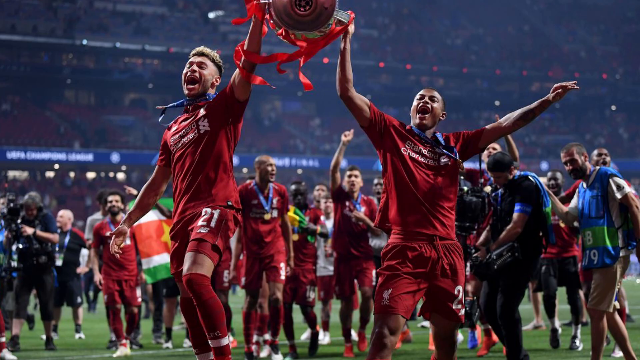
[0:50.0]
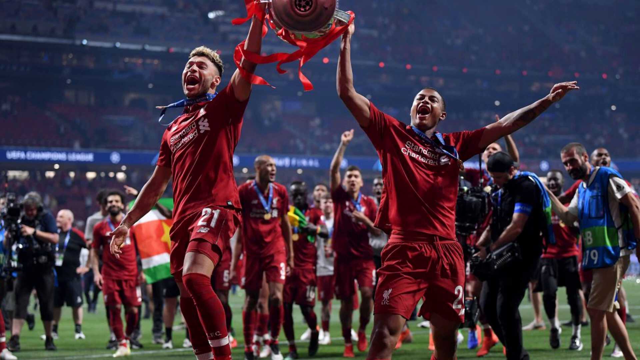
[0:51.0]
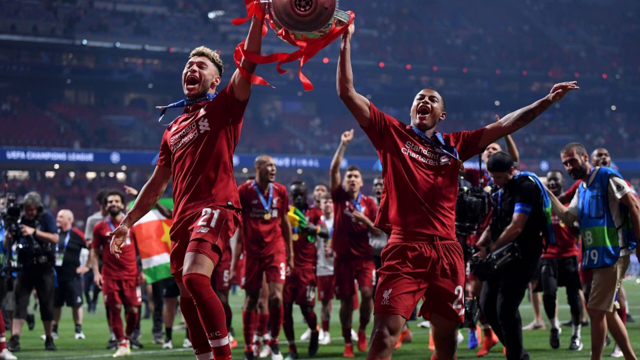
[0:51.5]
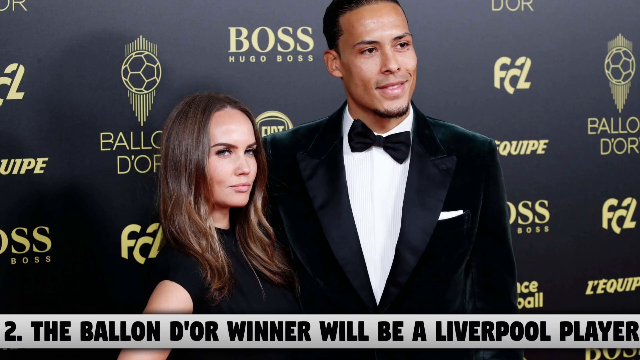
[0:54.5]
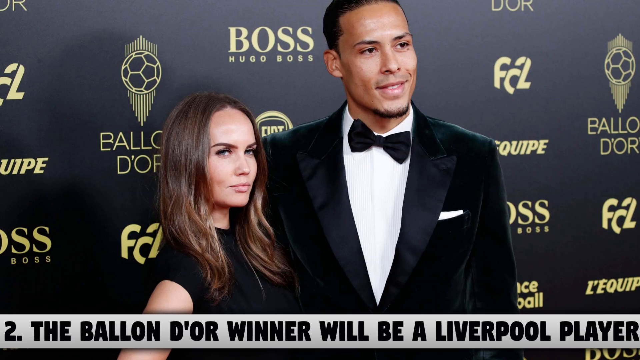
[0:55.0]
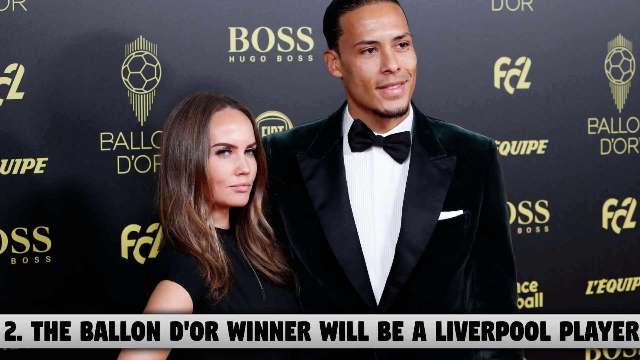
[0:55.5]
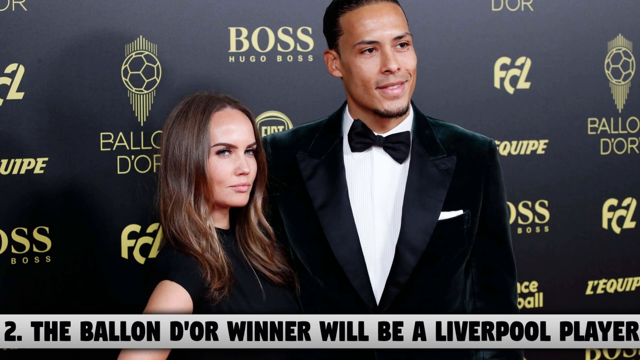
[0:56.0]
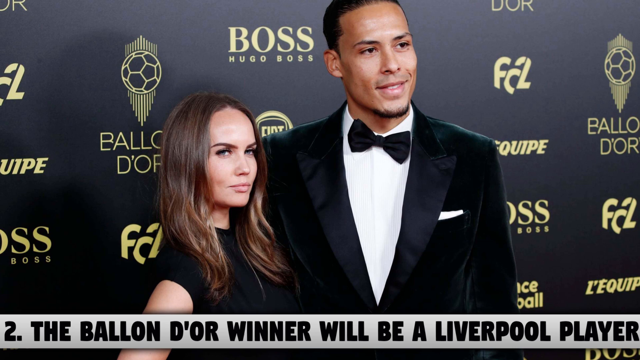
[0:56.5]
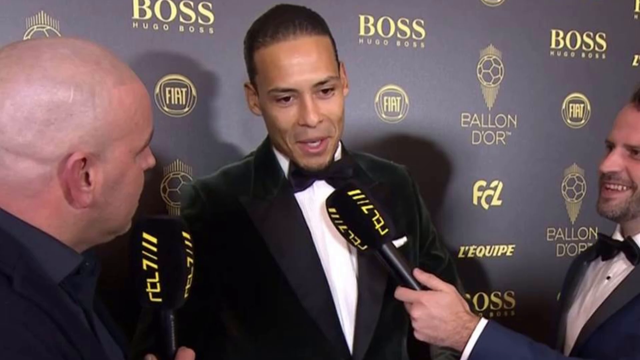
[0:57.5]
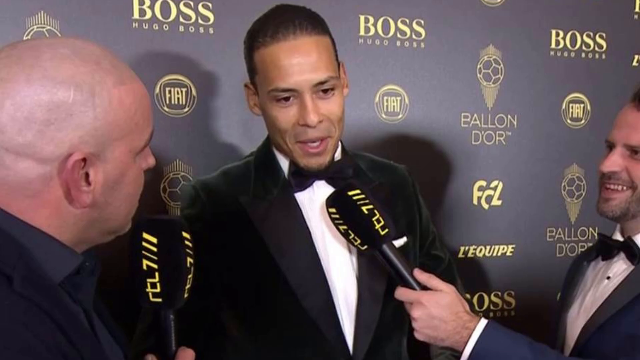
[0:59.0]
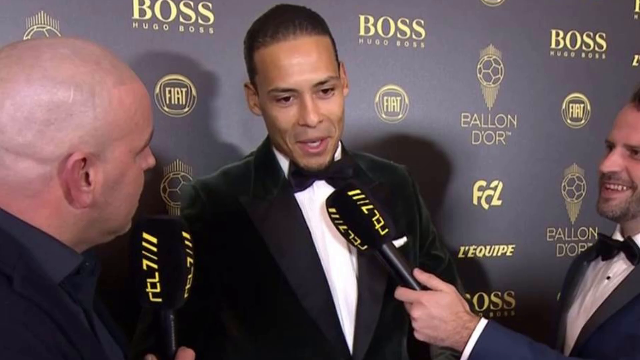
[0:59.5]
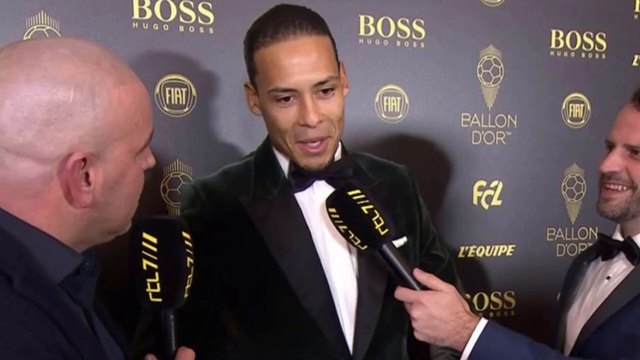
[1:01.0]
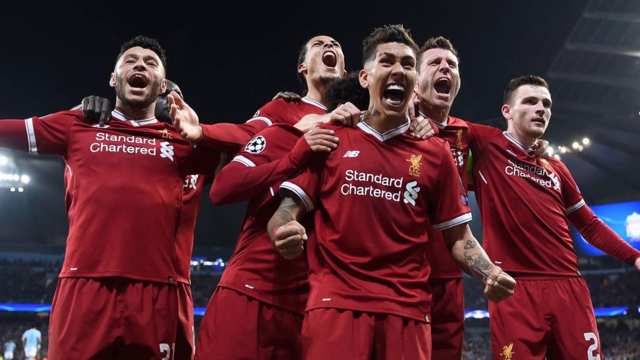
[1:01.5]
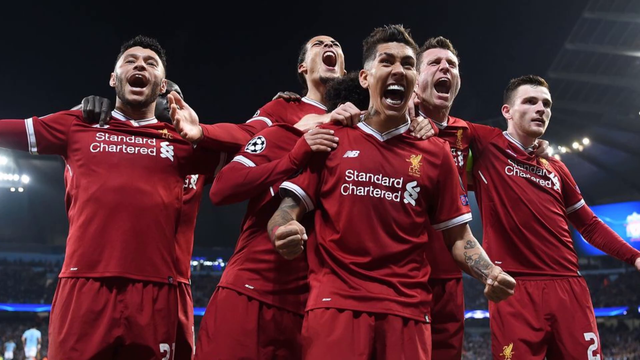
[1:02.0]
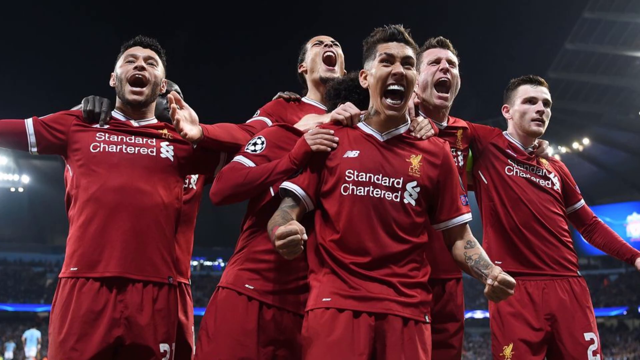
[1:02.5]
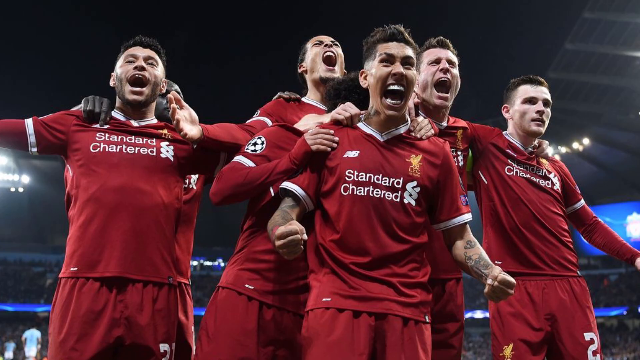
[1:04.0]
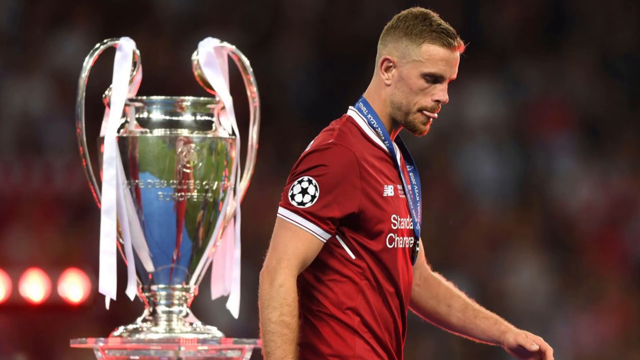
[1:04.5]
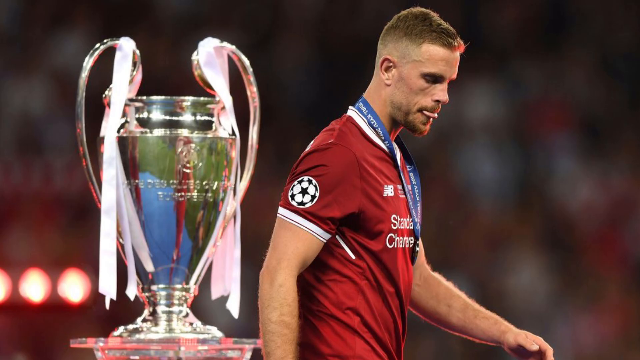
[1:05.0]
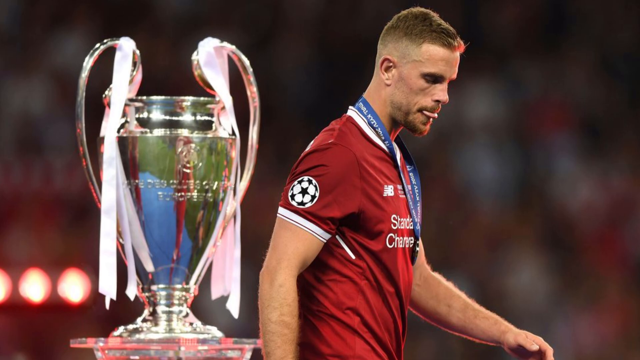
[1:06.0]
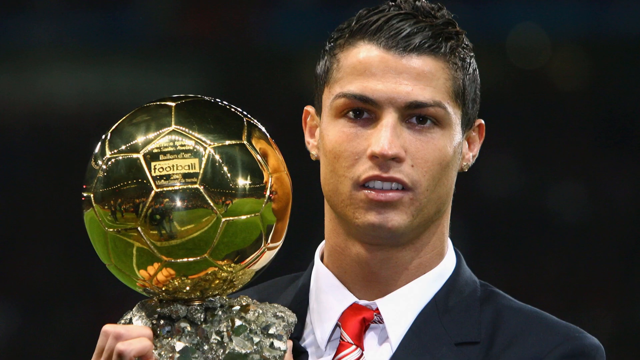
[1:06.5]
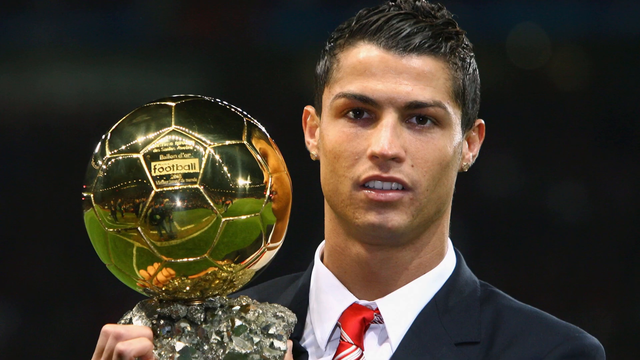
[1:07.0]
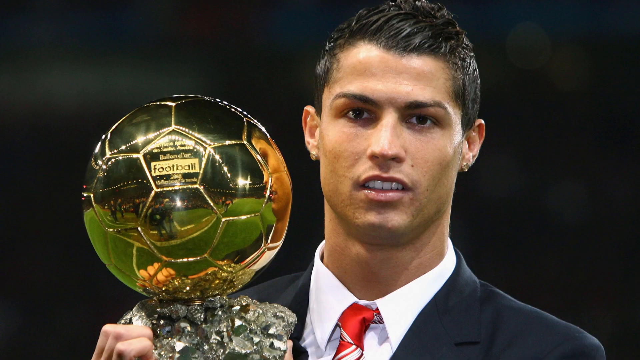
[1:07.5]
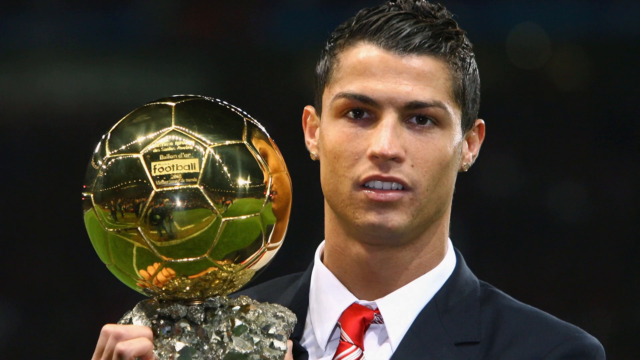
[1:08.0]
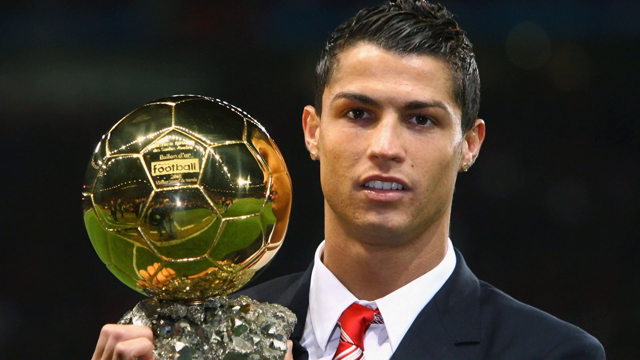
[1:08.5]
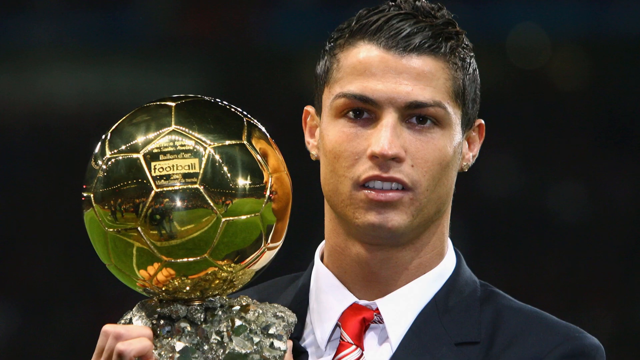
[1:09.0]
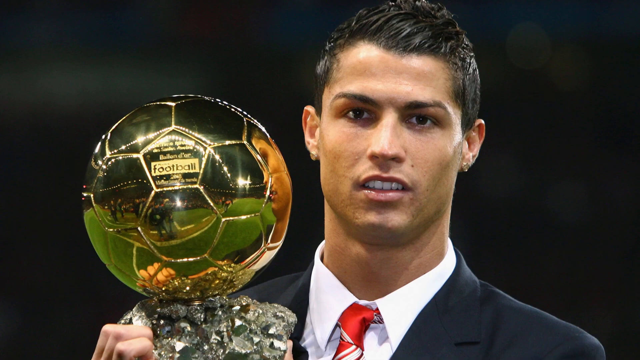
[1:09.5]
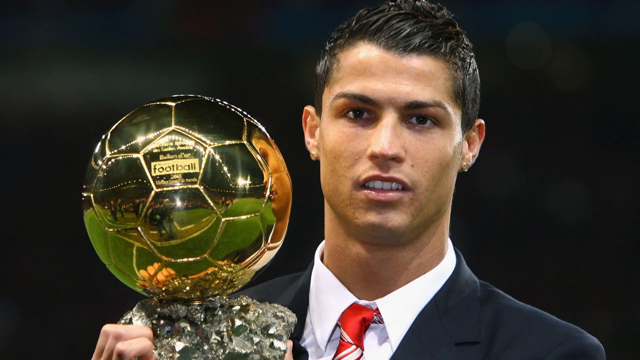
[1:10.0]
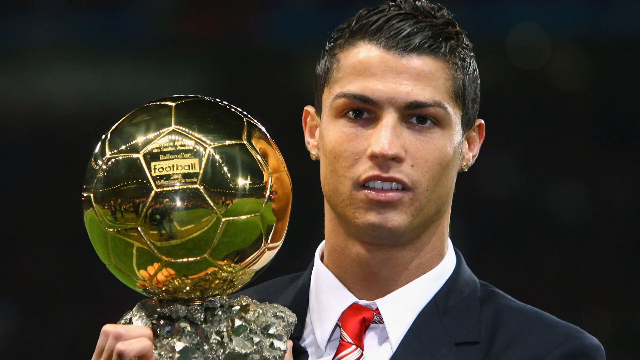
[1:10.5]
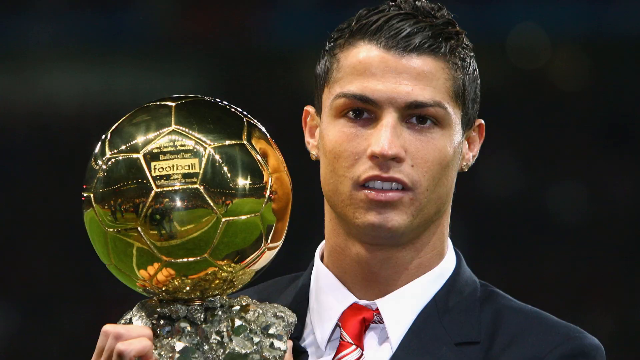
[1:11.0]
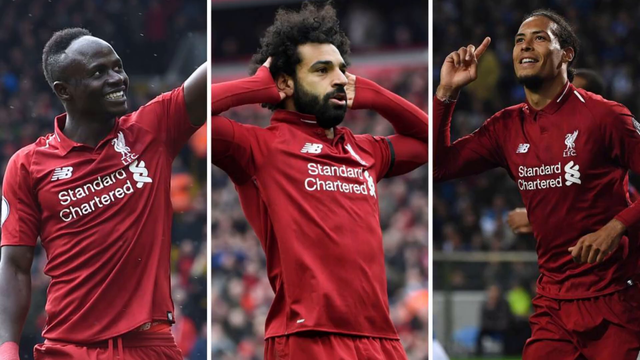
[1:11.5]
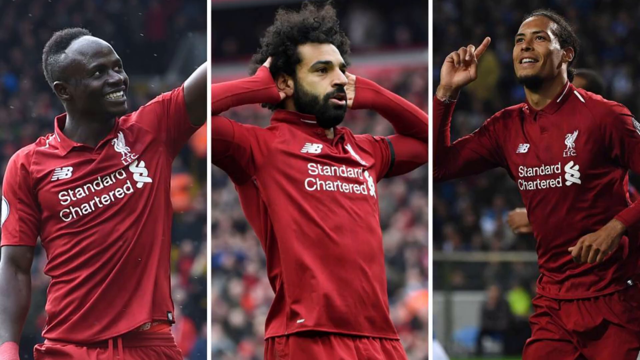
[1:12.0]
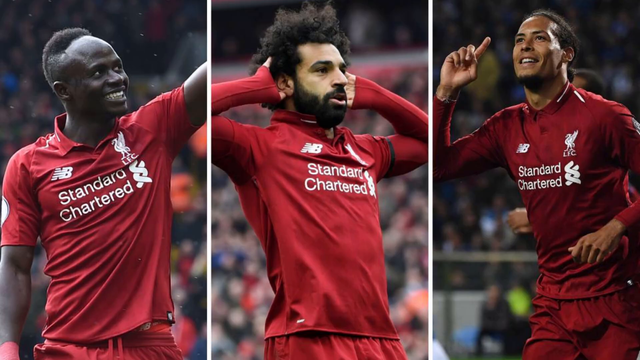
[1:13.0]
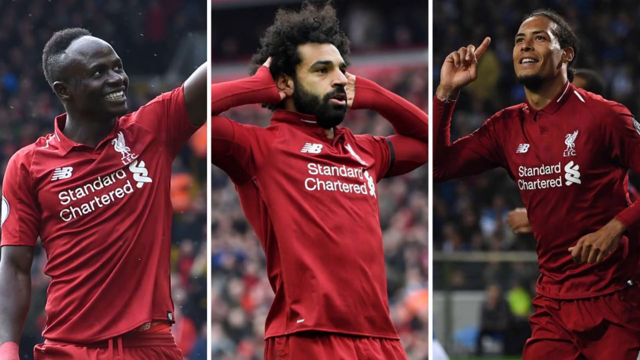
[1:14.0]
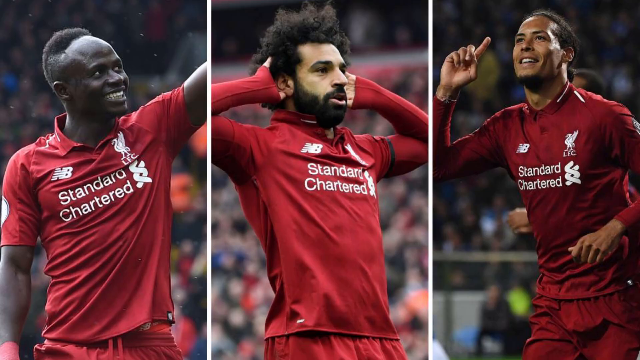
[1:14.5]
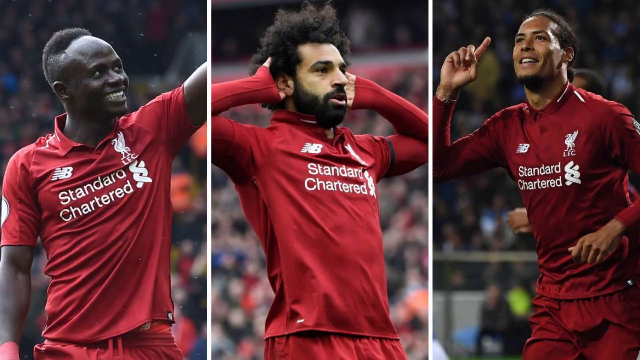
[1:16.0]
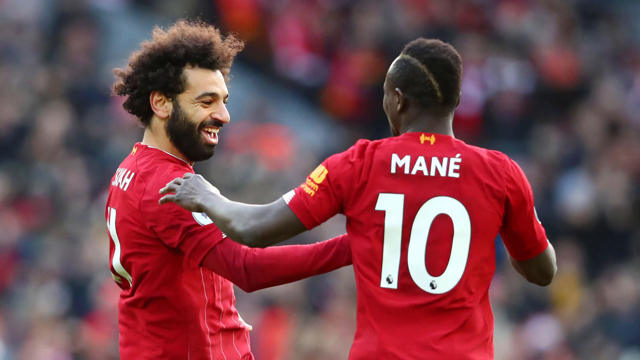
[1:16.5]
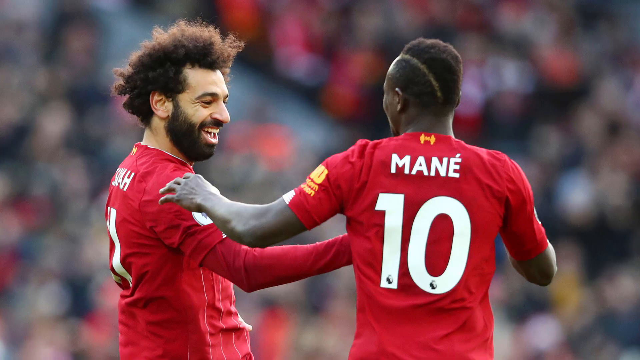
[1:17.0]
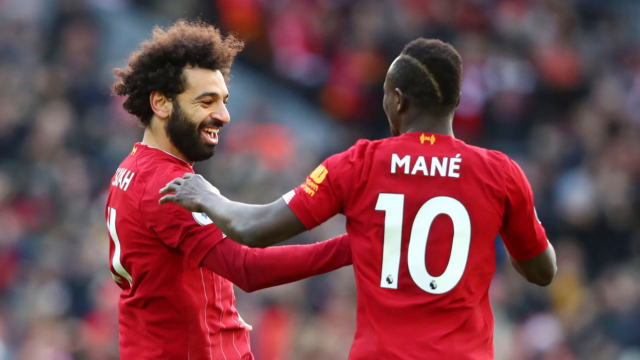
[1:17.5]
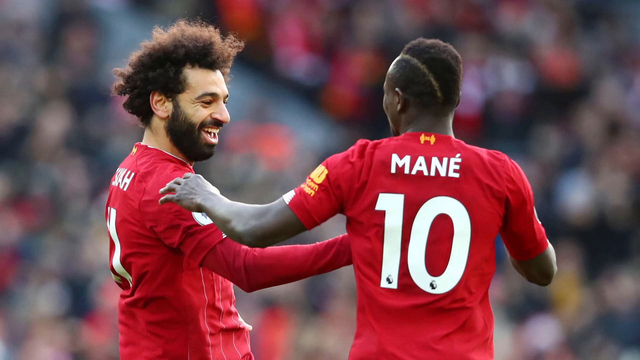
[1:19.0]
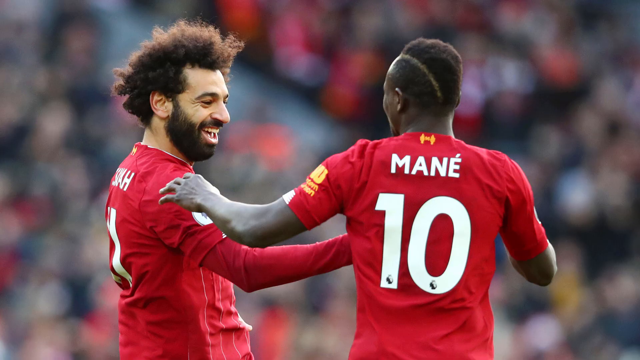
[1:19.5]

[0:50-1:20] What appears to be a stadium, probably a soccer stadium, is shown. In the foreground, two soccer players hold a large trophy up over their heads, each with an arm and a hand on it: the right player holds it with his right hand and the left player with his left hand. A large stadium is in the background, and there appear to be not very many people in the visible seats. The players wear red tops with red shorts, with white text on the tops and shorts. In the bottom left, a cameraman operates a camera. The scene changes to a woman and a man in the center of the screen. The woman is Caucasian, with brown hair with blonde highlights, and wears a black short-sleeved top. The man next to her appears to be African-American, has really short hair, is smiling, and wears a tuxedo with a black bow tie. In the background is a black wall with some gold icons and emblems on it.